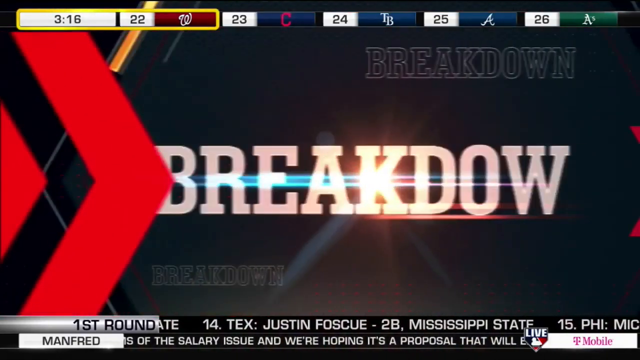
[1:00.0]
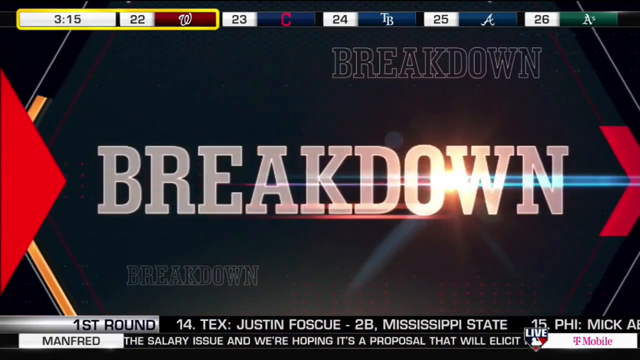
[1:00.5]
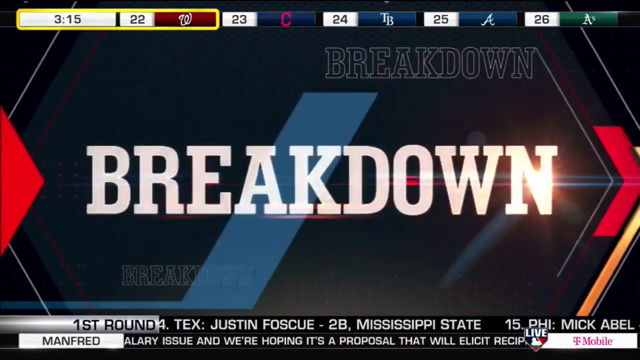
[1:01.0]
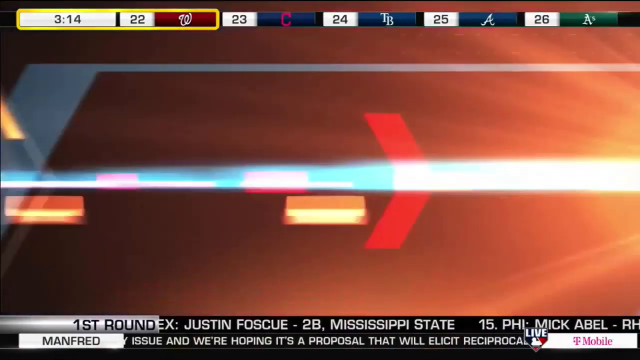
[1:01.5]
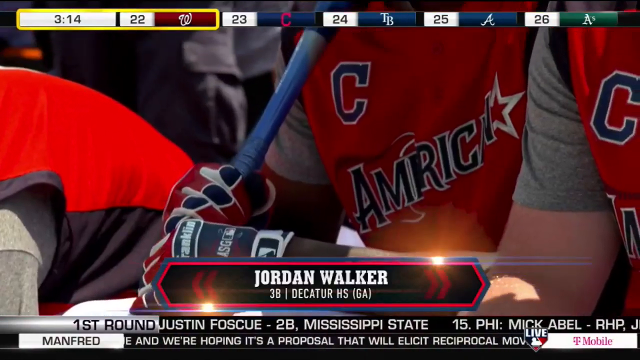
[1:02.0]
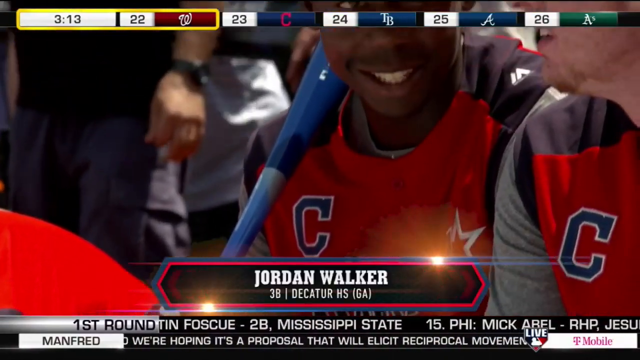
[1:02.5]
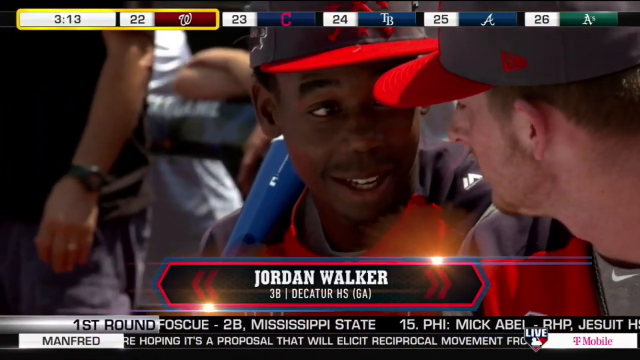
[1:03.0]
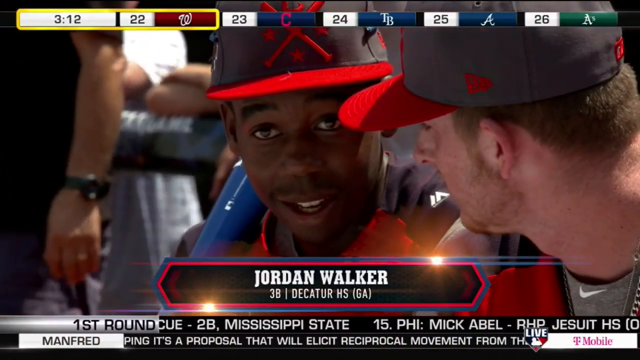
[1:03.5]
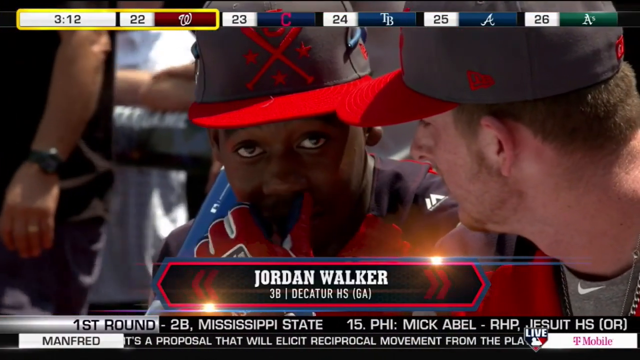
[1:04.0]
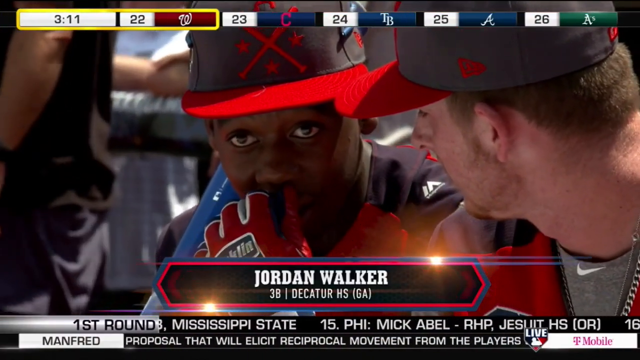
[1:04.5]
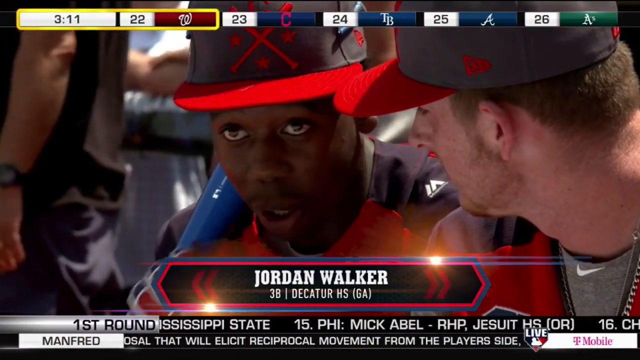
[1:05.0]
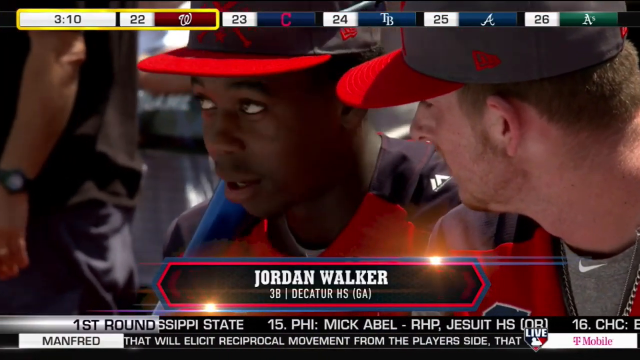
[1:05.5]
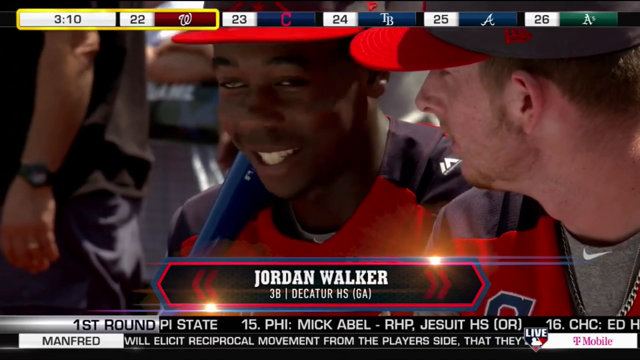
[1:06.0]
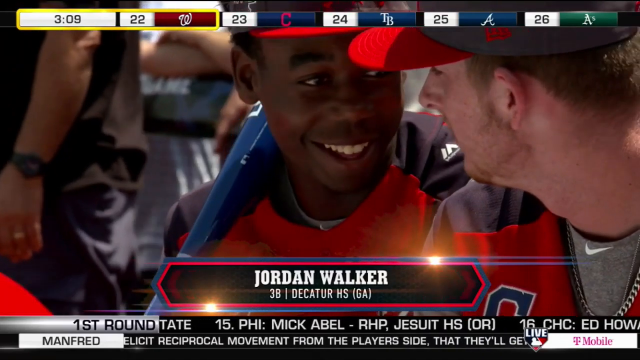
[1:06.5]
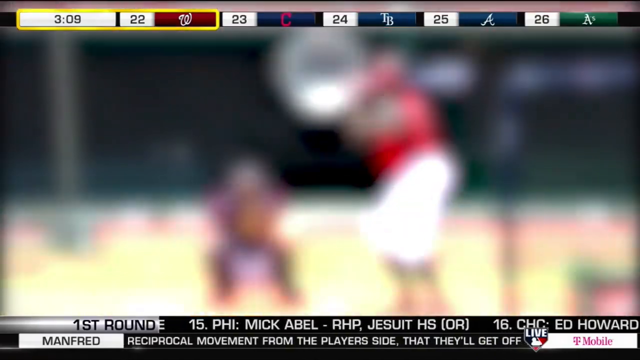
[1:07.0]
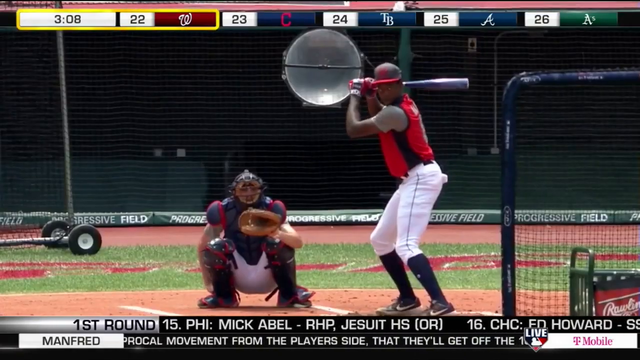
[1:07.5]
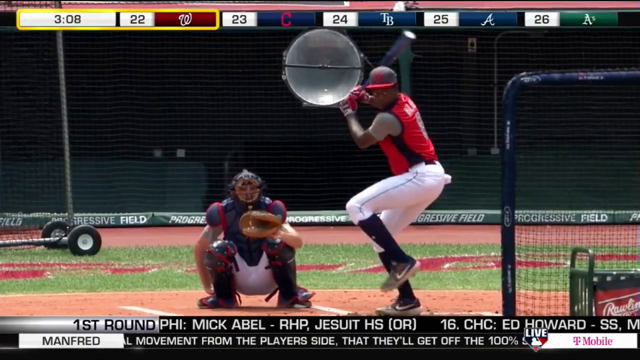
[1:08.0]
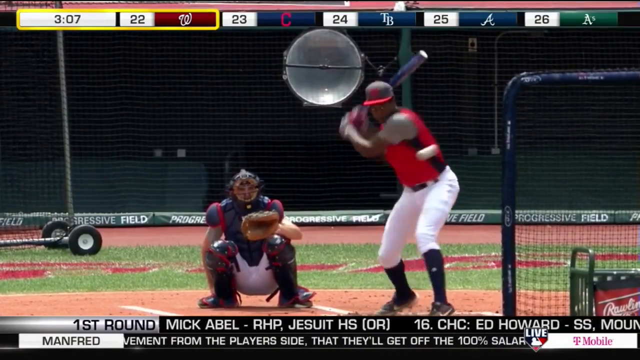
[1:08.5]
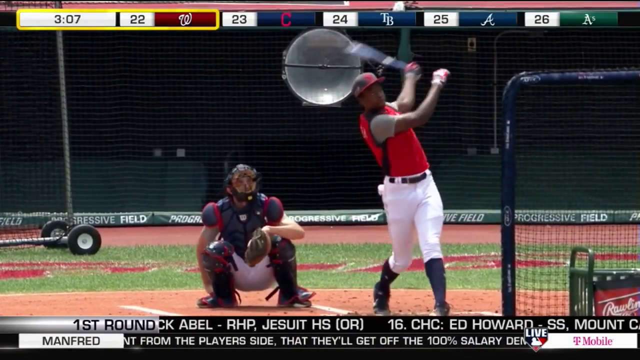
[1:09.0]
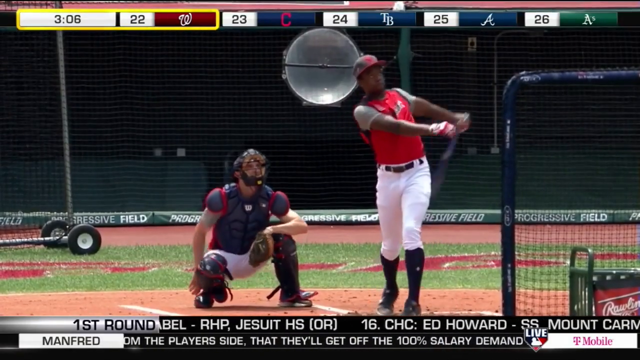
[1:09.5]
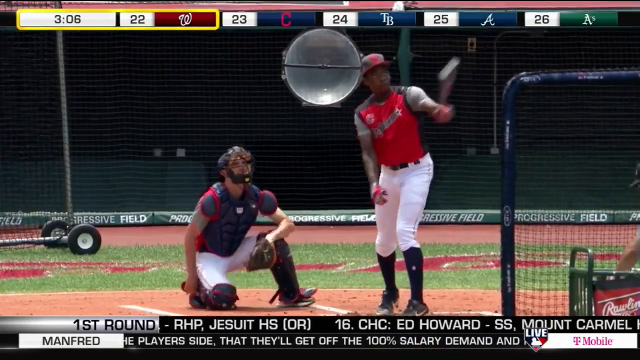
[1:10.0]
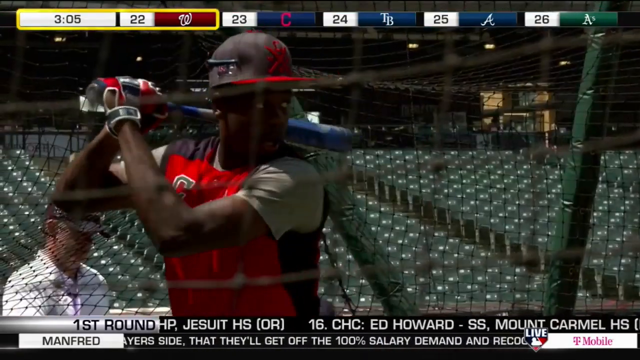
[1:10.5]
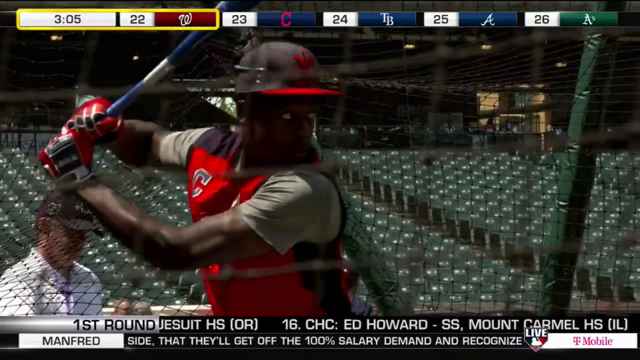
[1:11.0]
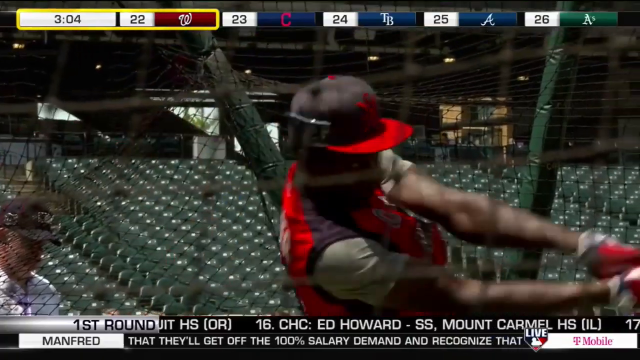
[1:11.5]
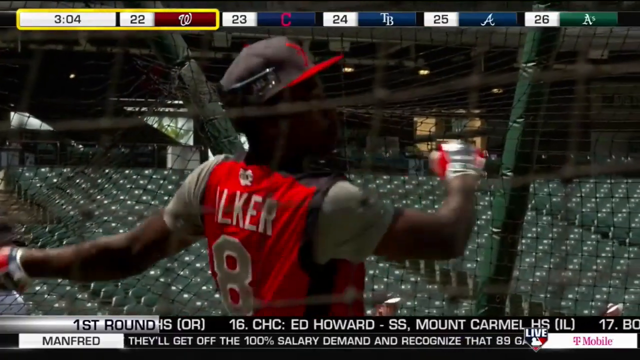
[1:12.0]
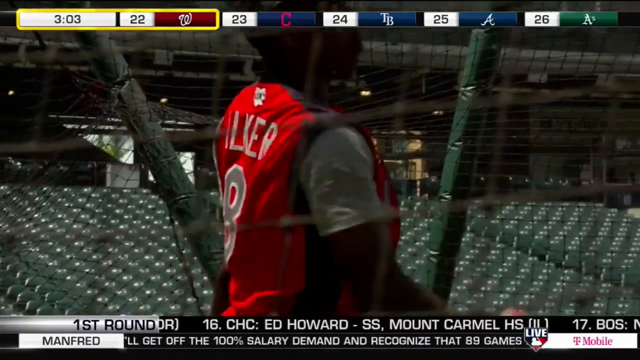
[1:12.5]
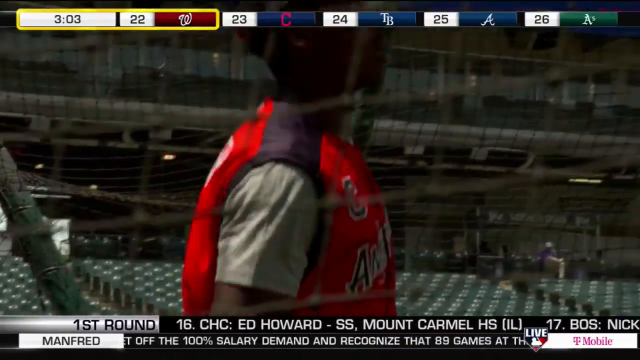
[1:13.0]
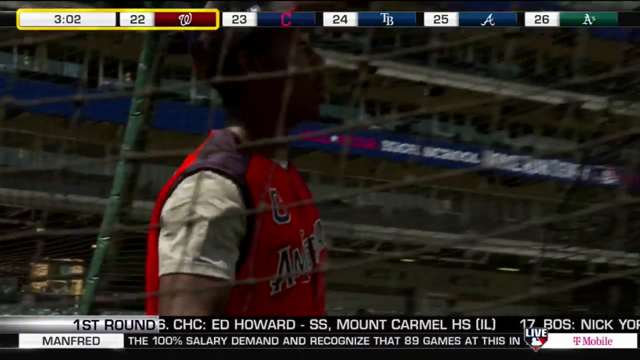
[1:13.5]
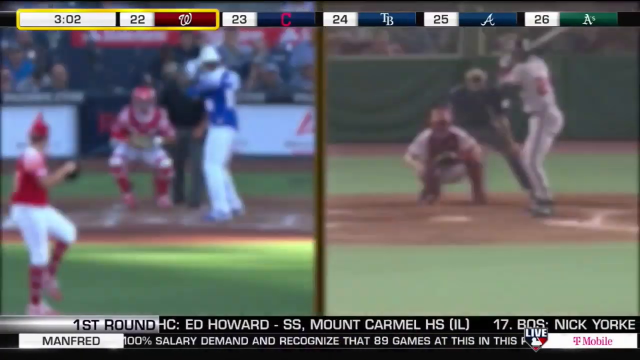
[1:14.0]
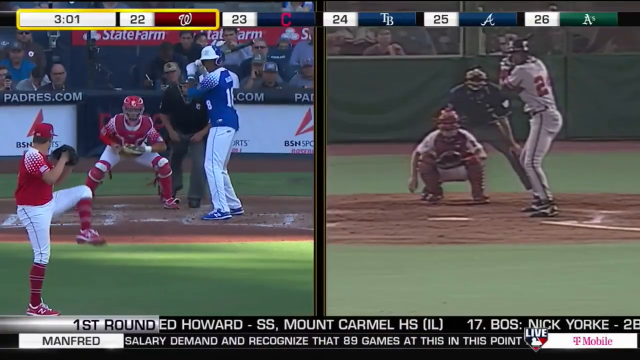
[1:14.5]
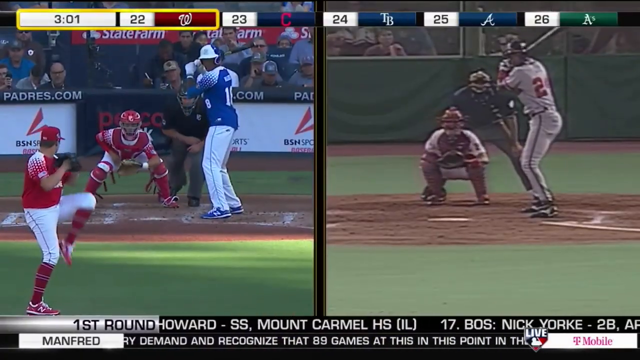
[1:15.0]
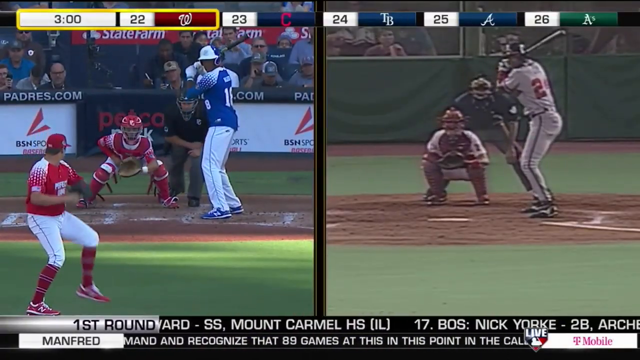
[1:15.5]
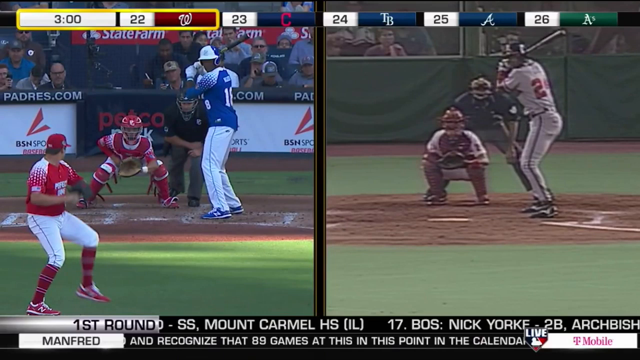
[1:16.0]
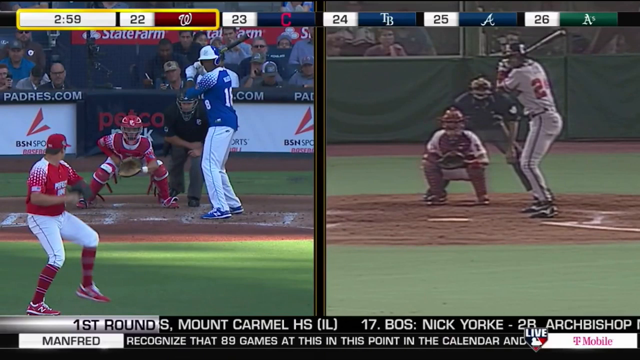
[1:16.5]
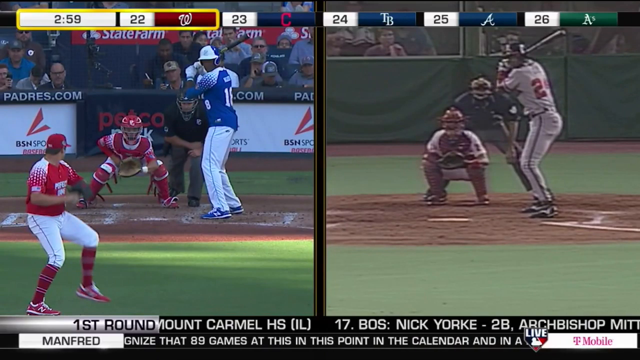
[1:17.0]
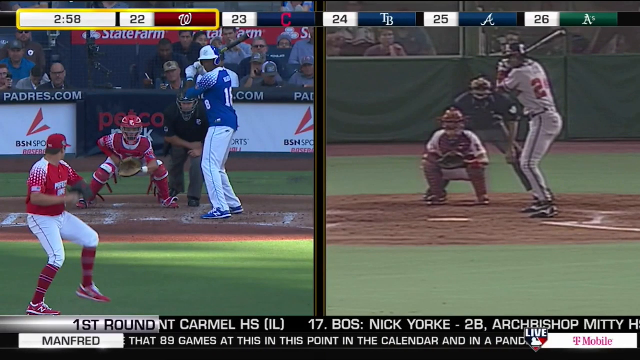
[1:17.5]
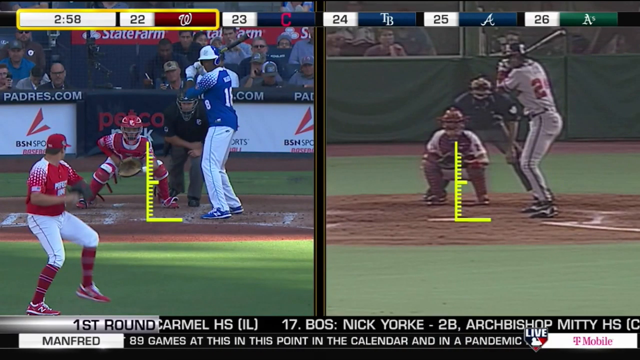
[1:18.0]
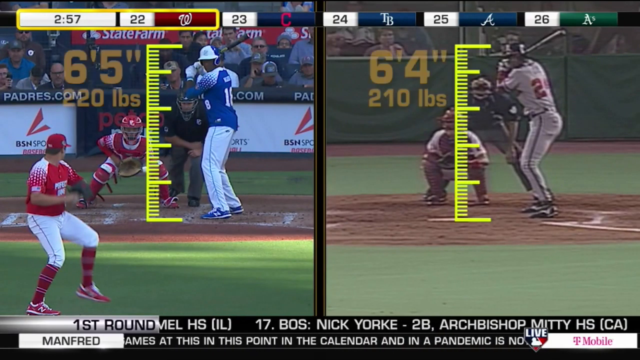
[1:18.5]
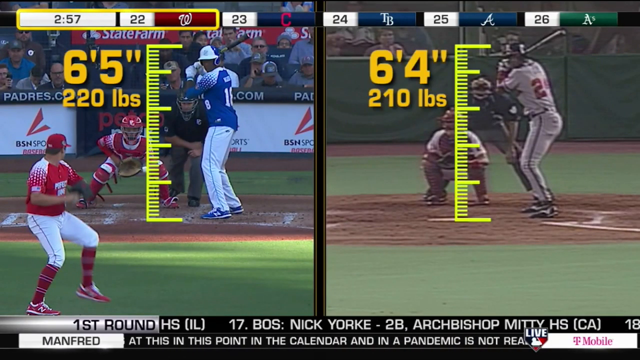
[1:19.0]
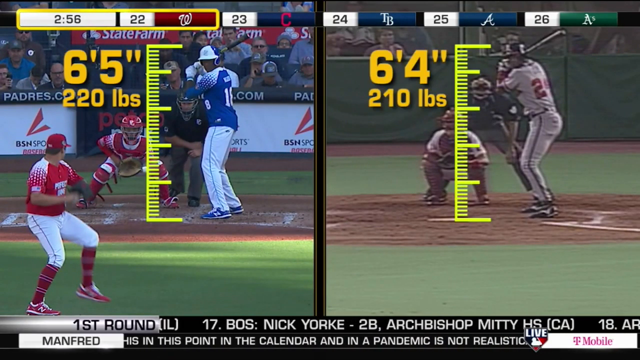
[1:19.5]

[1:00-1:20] After a transition, Jordan Walker sits on the bench wearing a black hat with a red brim, holding a blue baseball bat on his right shoulder and talking to a teammate who has fair skin and a slight beard. The video cuts to Walker taking batting practice; he is a left-handed batter. The ball strikes the bat as he twists his hips forward, and a protective net is visible on the right of the screen. A close-up through the net shows his face and arms as he continues batting practice, his arms extending toward the ball as the bat makes contact, and then he looks to the sky to see where the ball has gone. Next comes a side-by-side of Walker and another player. A graphic pops up showing one at six foot five and 220 pounds and the other at six foot four and 210 pounds. The image on the right seems vintage, with muted colors. The player on the left wears a white uniform with red numbers.